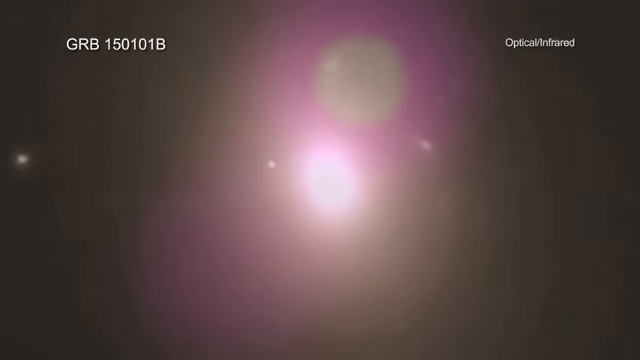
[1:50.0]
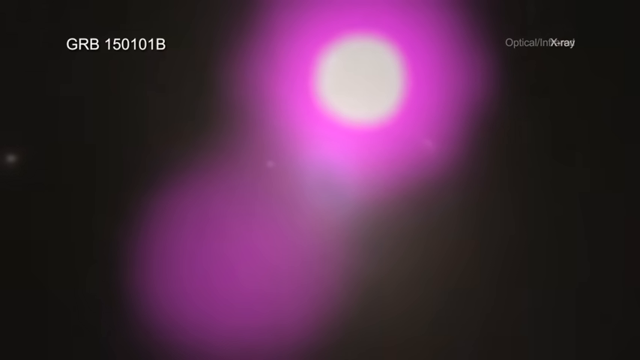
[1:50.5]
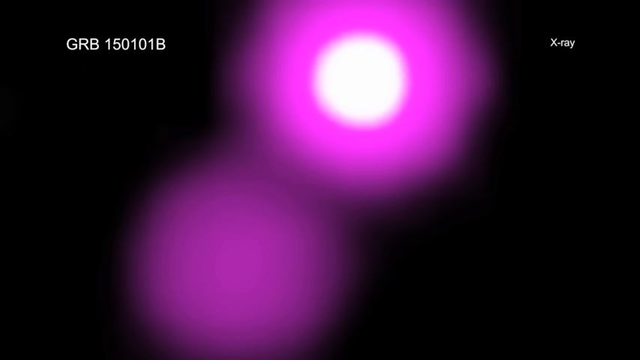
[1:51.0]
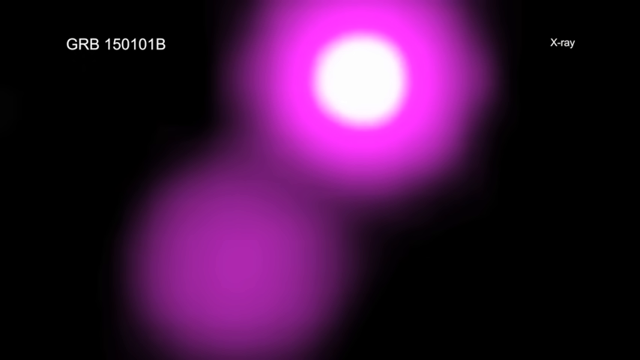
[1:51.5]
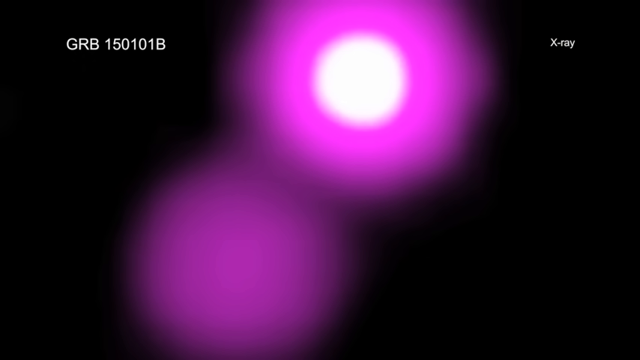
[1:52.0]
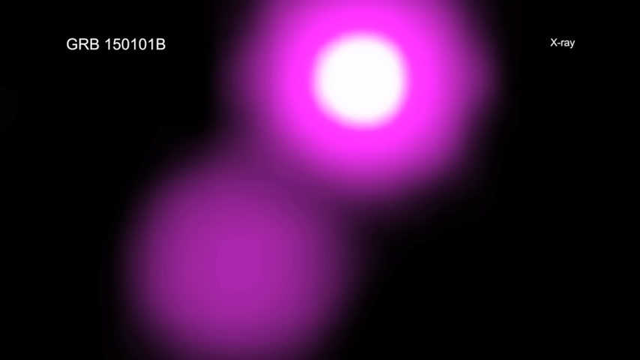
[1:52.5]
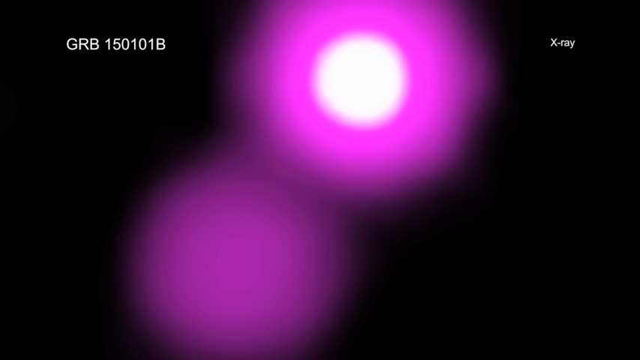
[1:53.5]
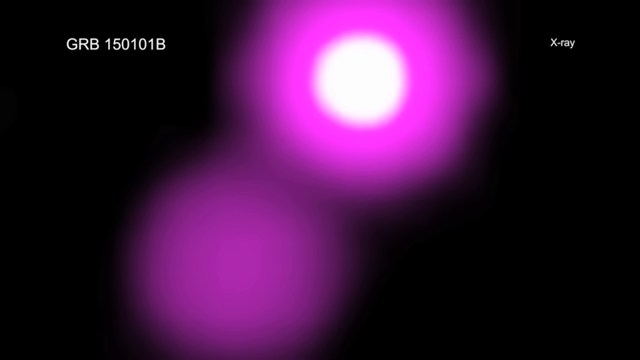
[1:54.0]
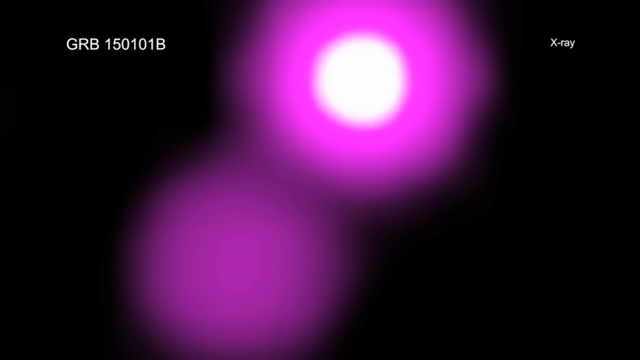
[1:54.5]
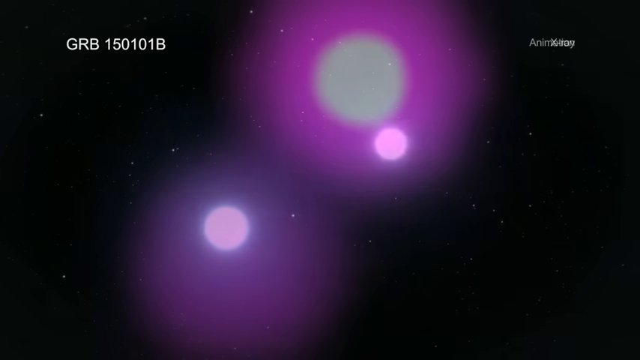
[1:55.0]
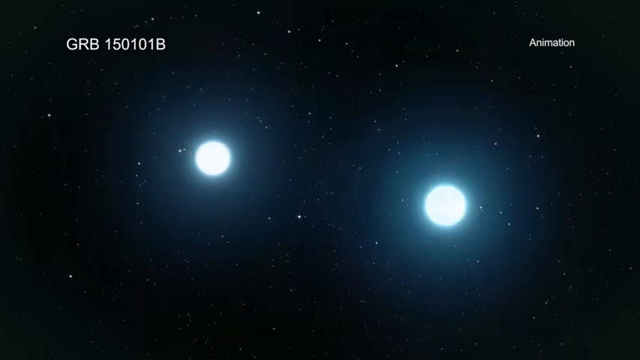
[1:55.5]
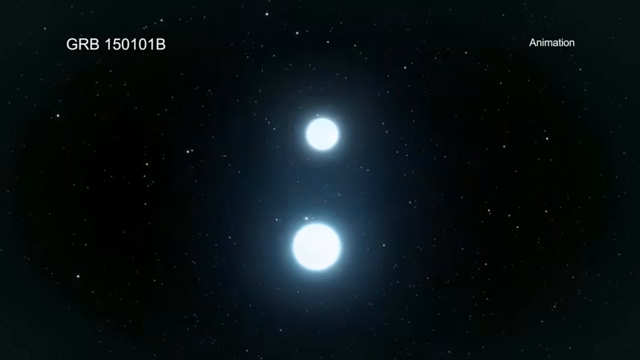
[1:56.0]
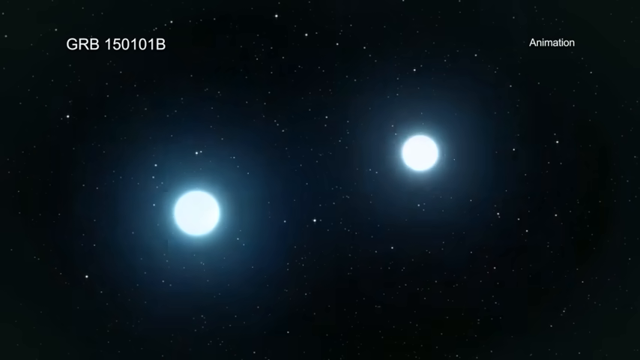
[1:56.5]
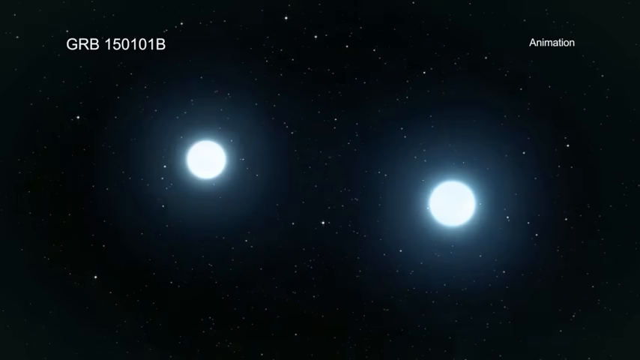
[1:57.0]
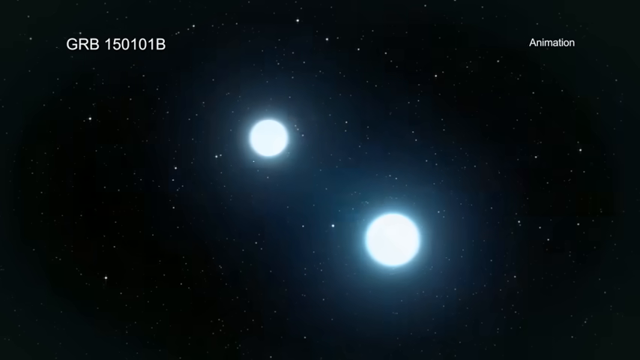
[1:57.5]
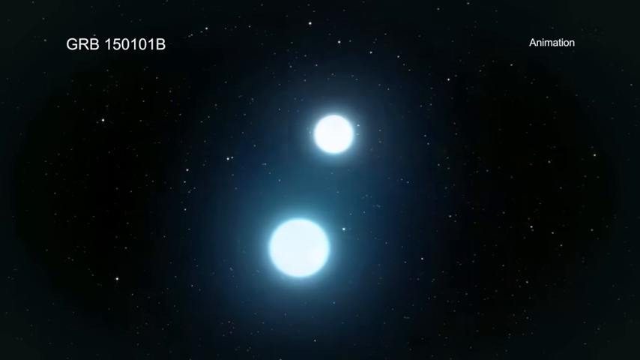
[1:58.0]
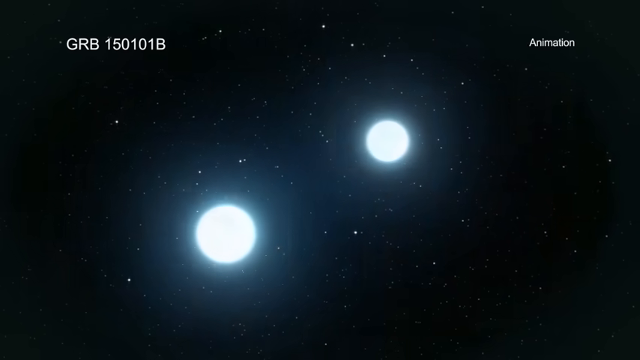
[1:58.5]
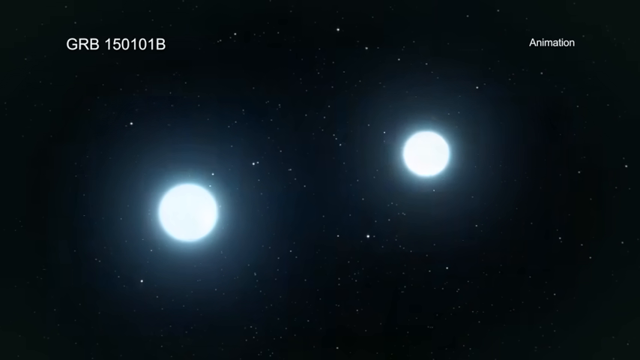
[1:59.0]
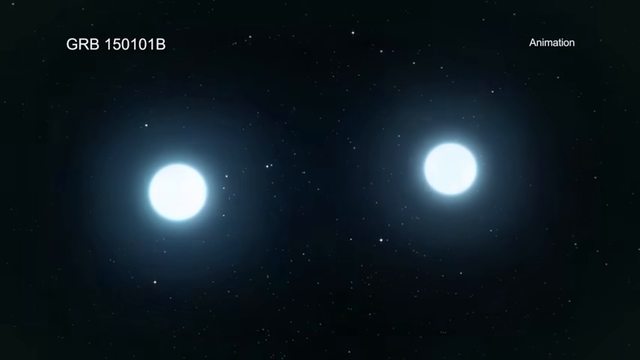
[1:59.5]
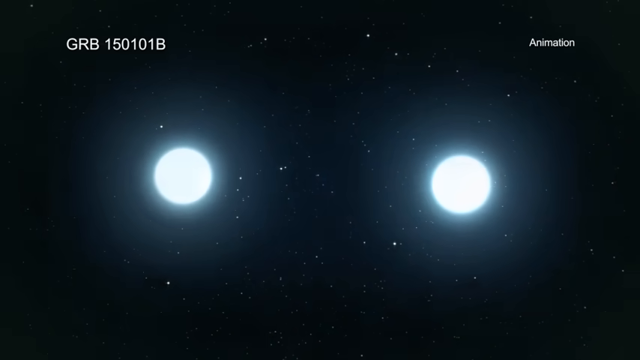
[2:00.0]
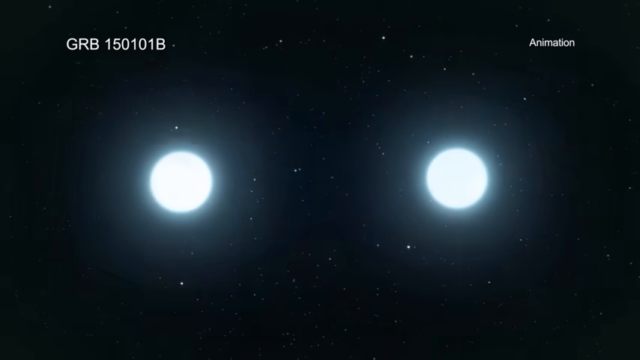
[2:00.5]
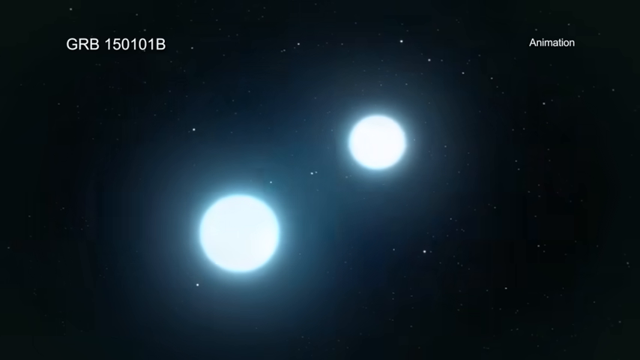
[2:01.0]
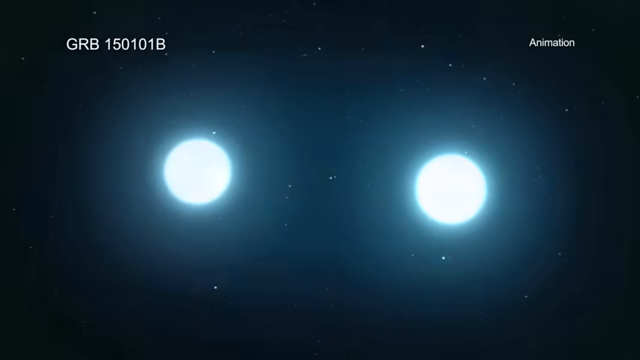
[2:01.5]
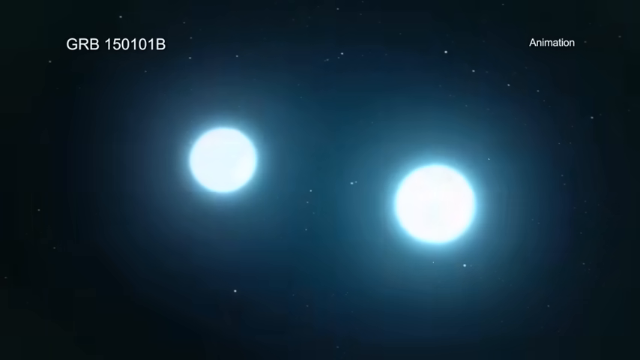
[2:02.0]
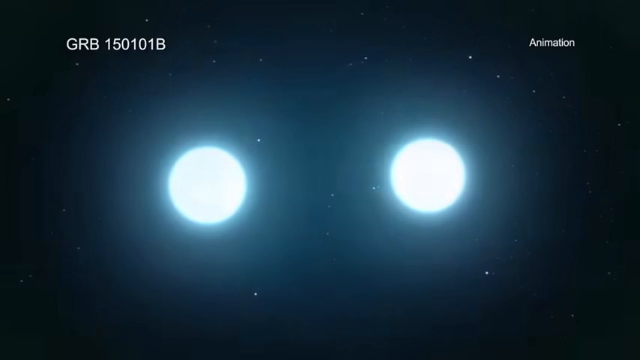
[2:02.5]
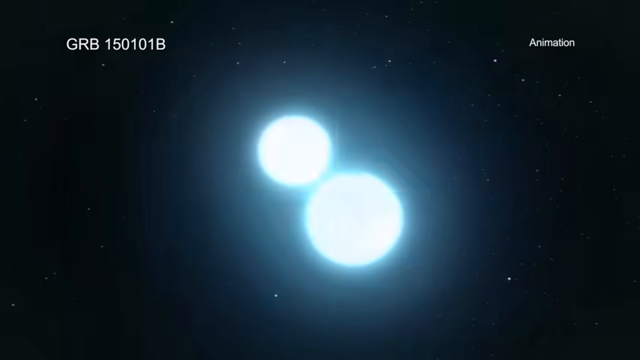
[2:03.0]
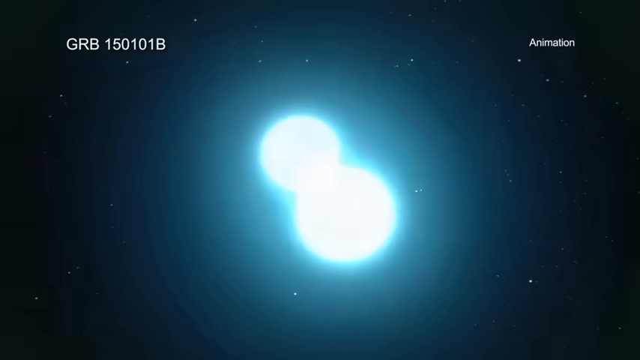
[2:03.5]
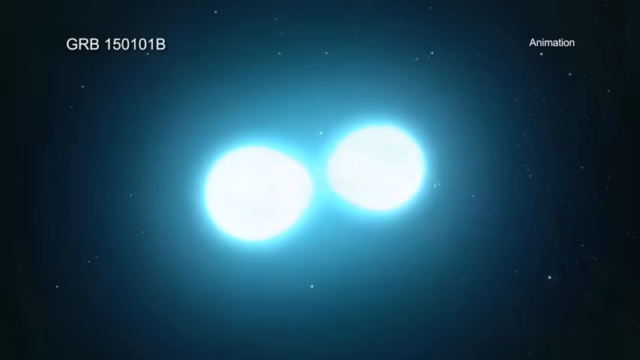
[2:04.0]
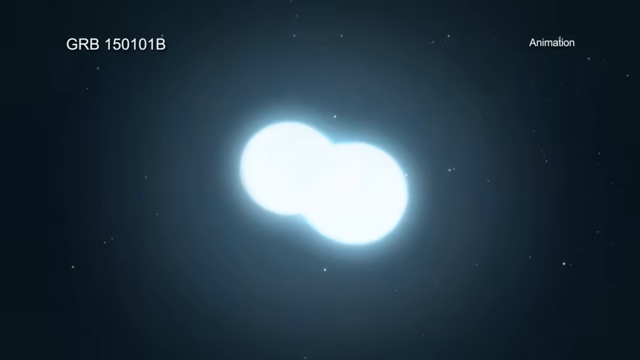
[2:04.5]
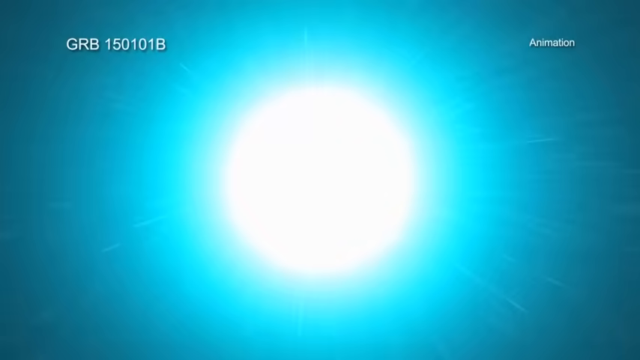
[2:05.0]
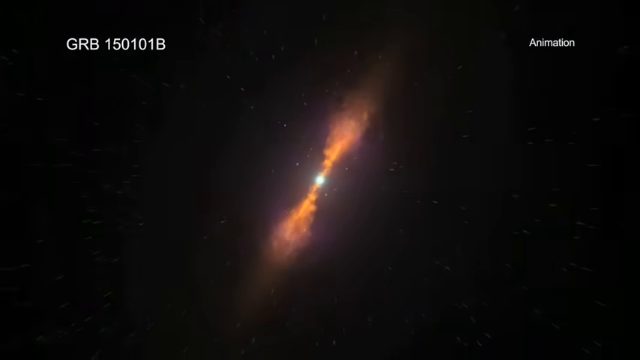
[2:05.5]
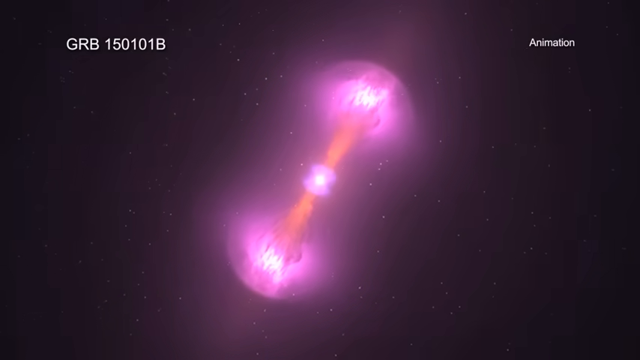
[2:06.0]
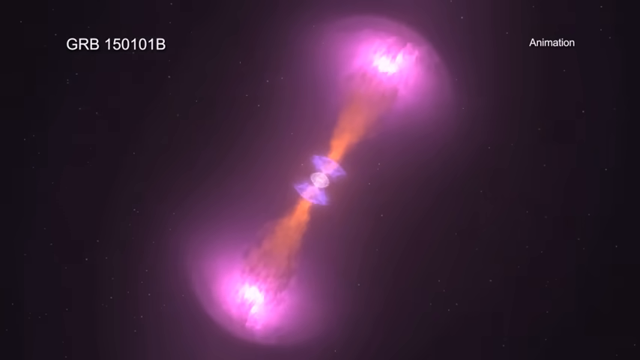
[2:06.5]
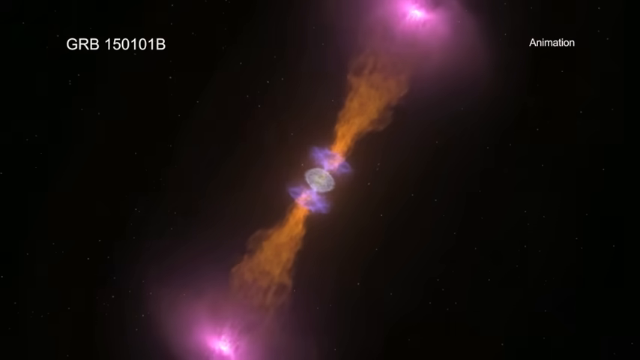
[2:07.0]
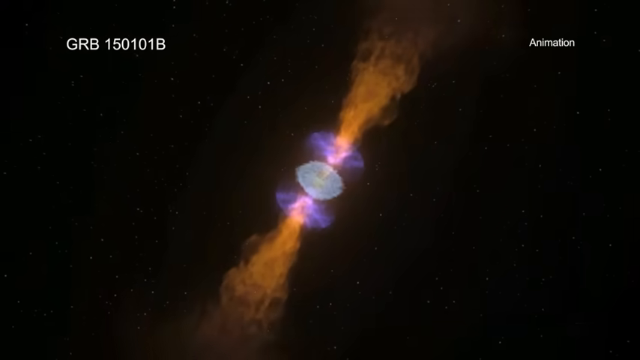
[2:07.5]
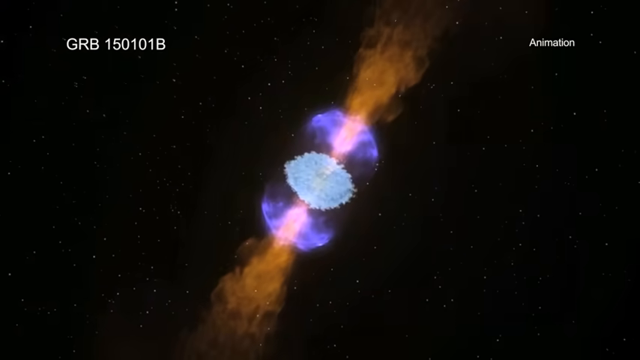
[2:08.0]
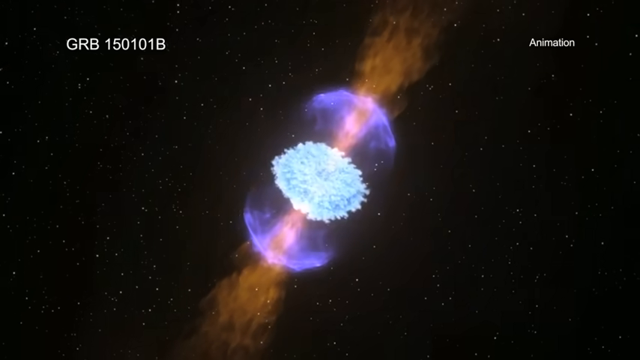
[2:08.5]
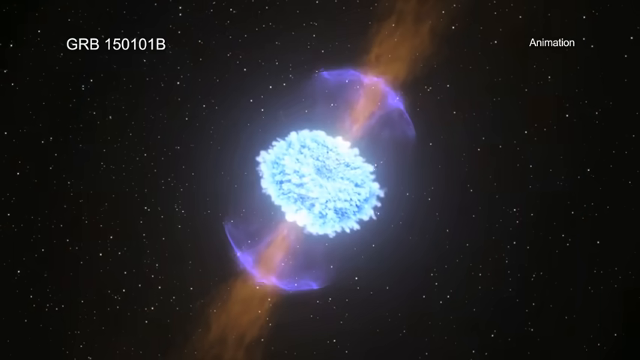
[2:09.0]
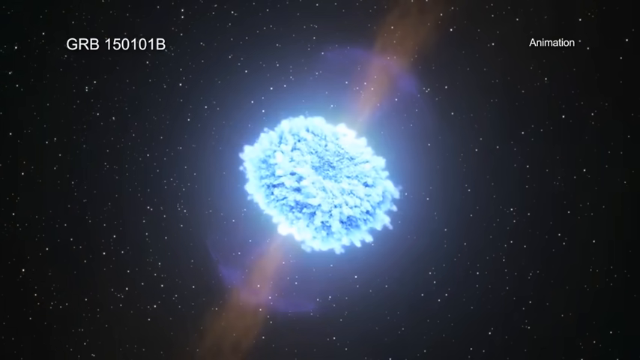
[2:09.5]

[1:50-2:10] A bright pink and white sphere is shown on a backdrop of space. The pink sphere transforms into two green and blue dots rotating around each other, with a deep black expanse of space and small bright white stars behind them. The balls rotate faster and faster, then touch and explode in a large shower of light, which turns into a blue and green explosion with energy moving out from the north and south of the object, against a large backdrop of stars. The sequence shows different stages of a star explosion, from a pink star to the two rotating spheres to a large gas ball of energy. The main scene is labeled "animation".